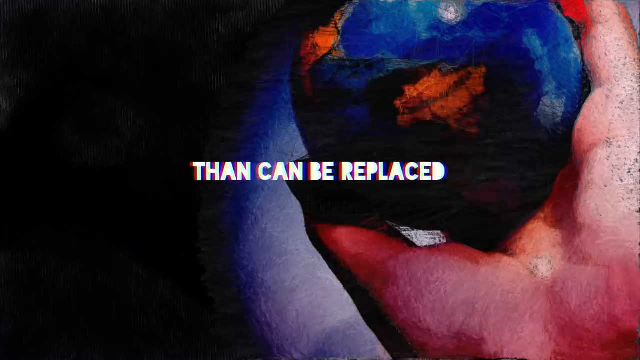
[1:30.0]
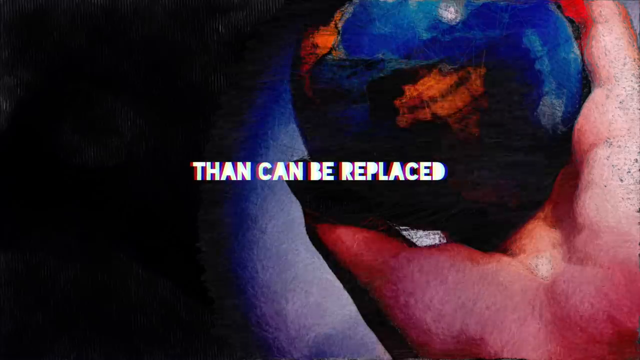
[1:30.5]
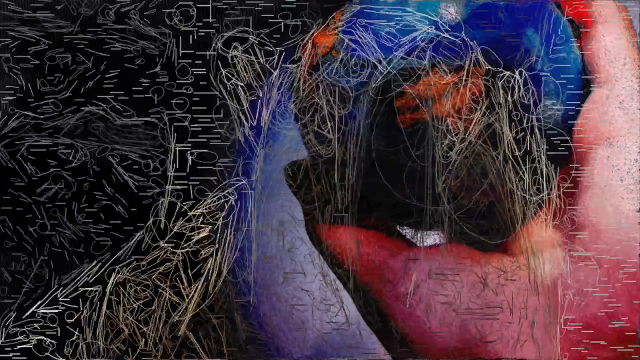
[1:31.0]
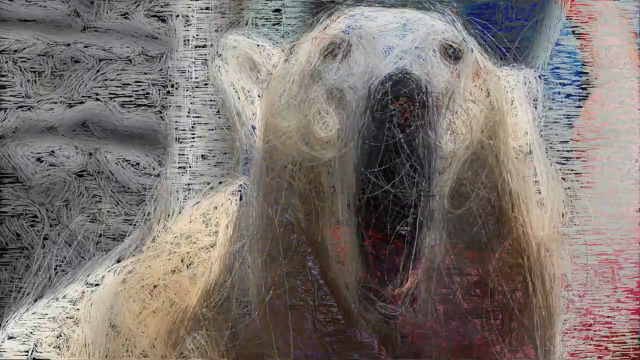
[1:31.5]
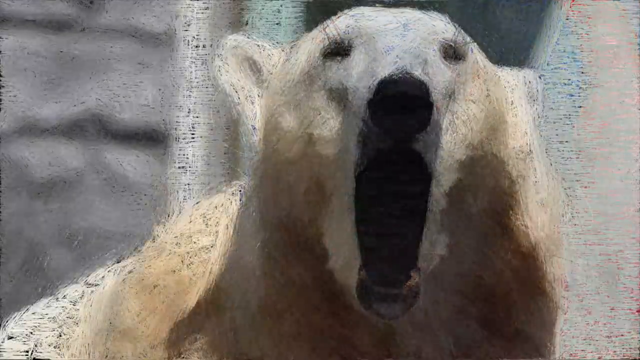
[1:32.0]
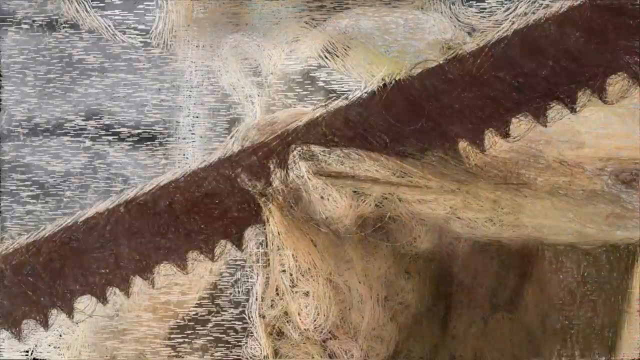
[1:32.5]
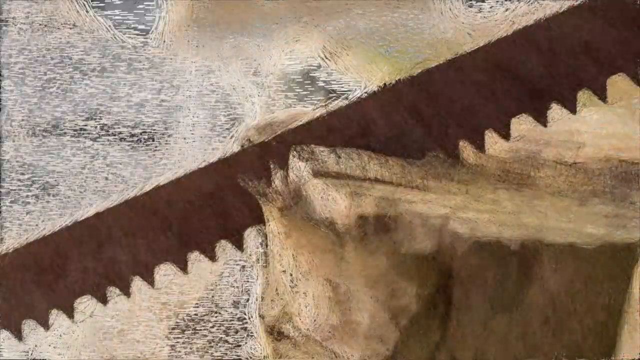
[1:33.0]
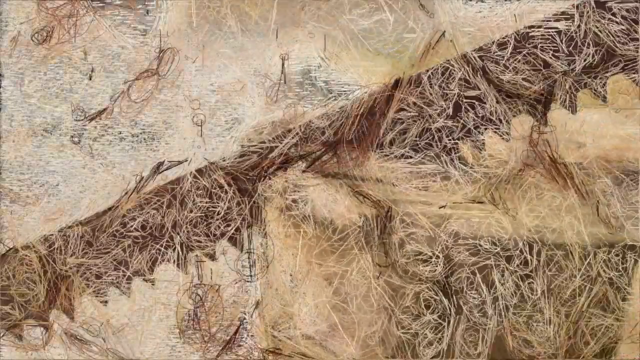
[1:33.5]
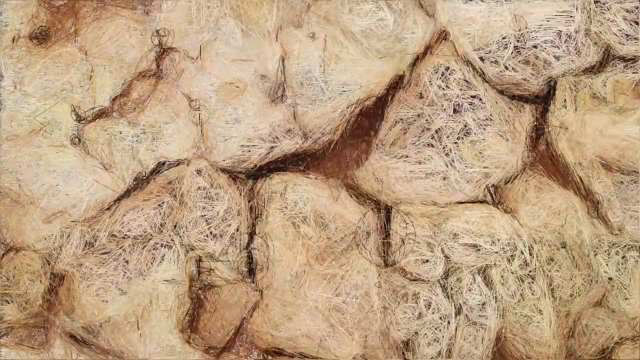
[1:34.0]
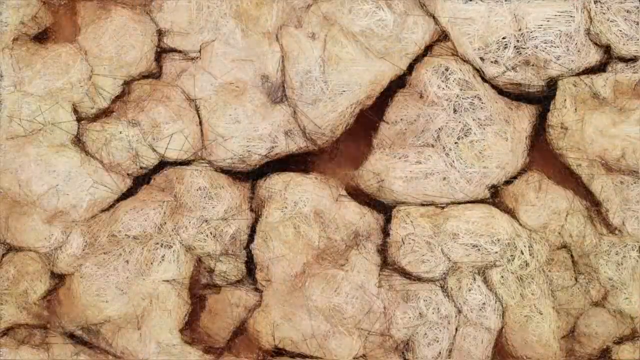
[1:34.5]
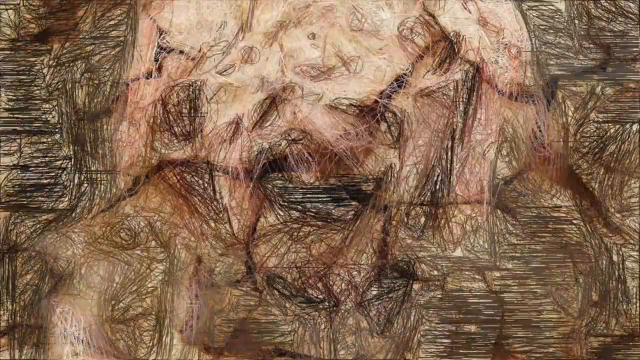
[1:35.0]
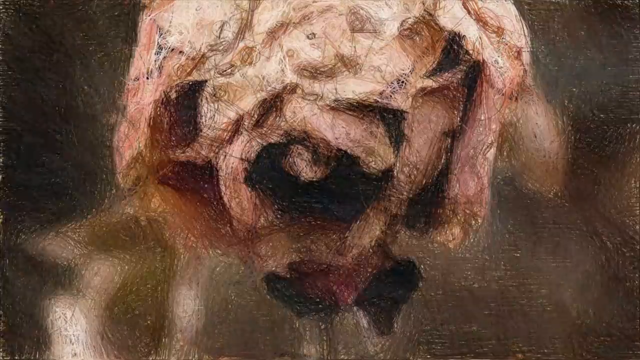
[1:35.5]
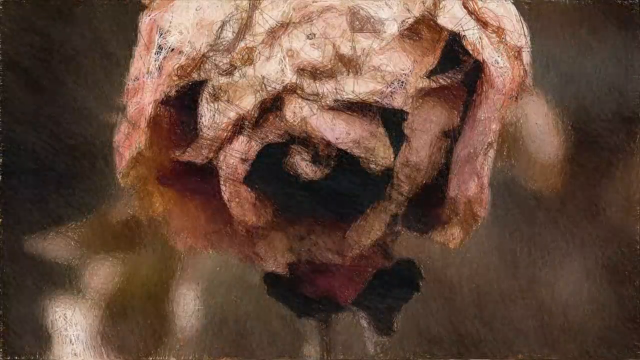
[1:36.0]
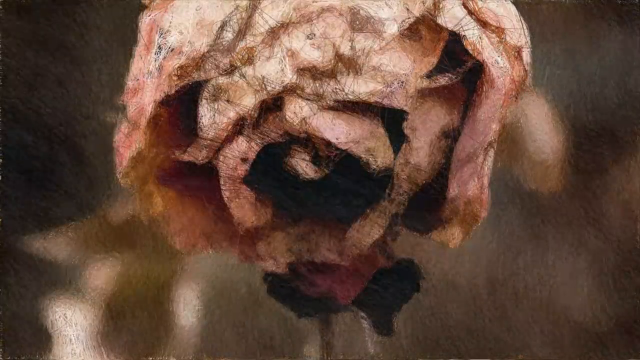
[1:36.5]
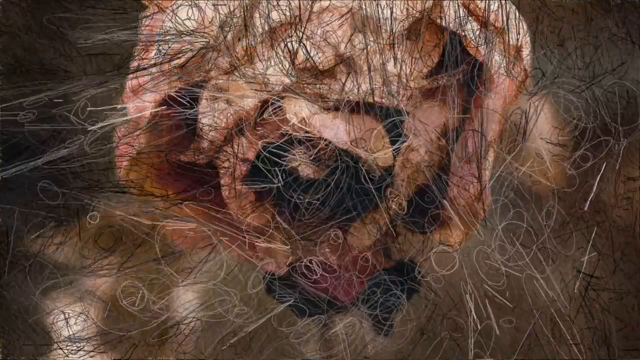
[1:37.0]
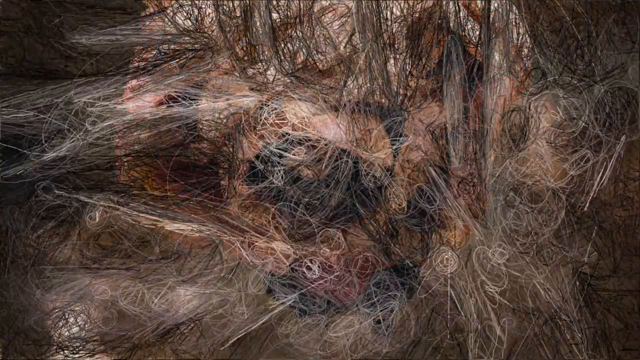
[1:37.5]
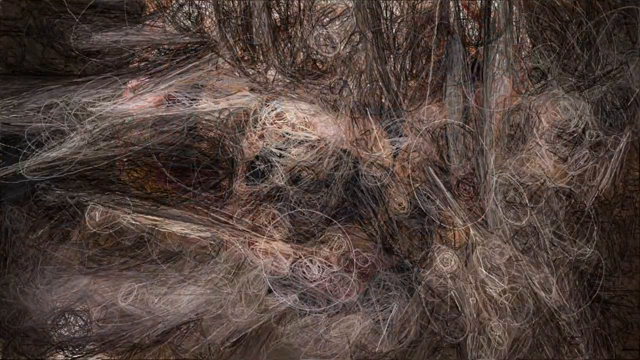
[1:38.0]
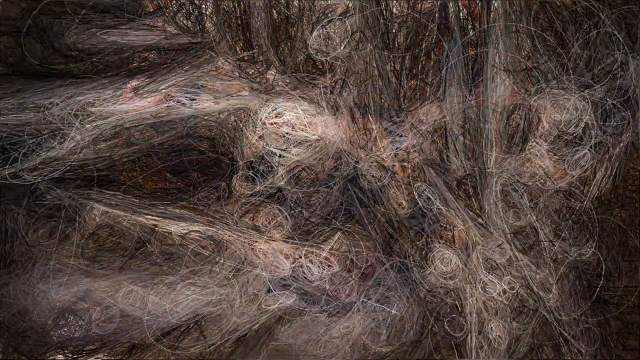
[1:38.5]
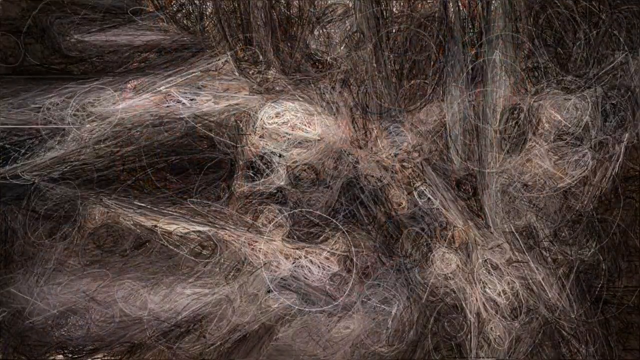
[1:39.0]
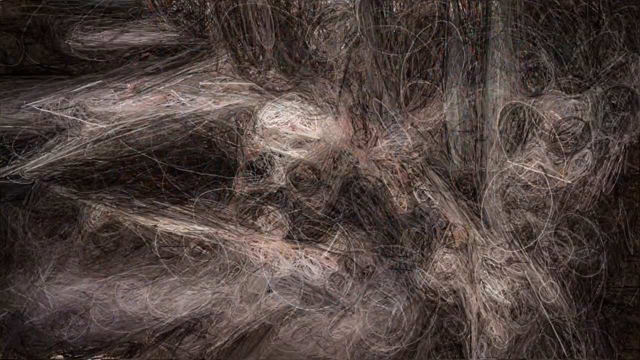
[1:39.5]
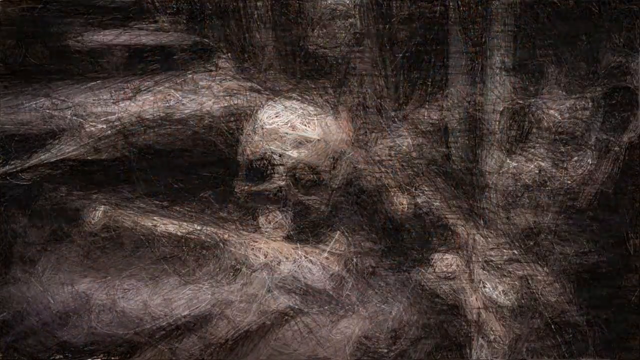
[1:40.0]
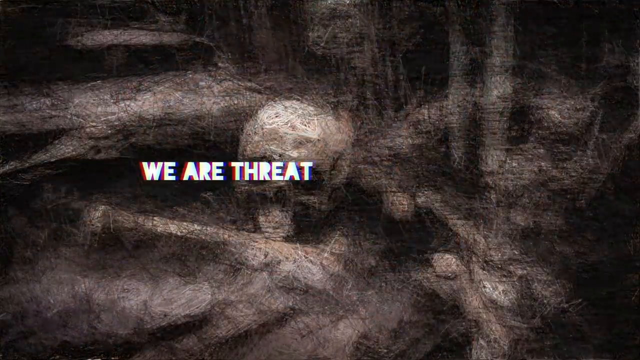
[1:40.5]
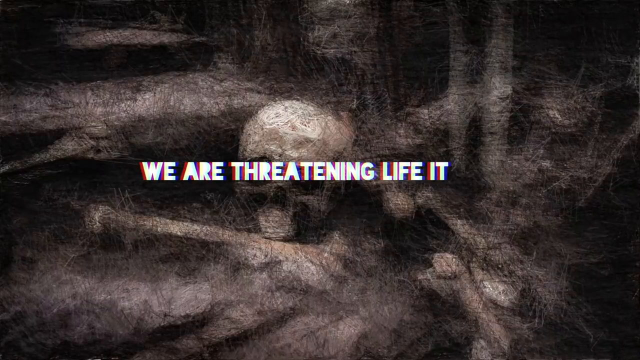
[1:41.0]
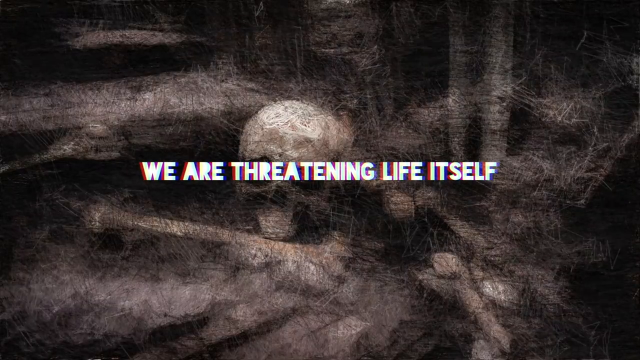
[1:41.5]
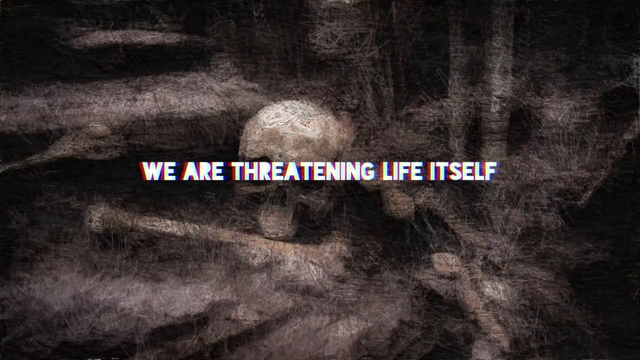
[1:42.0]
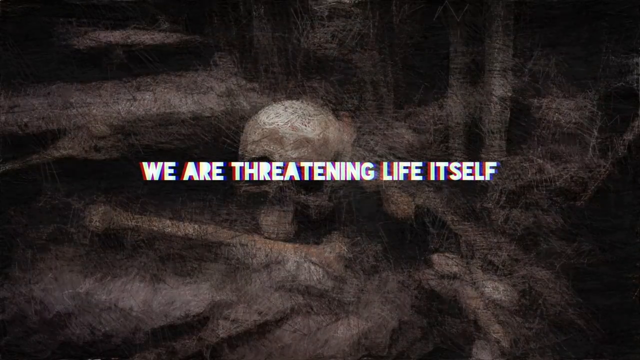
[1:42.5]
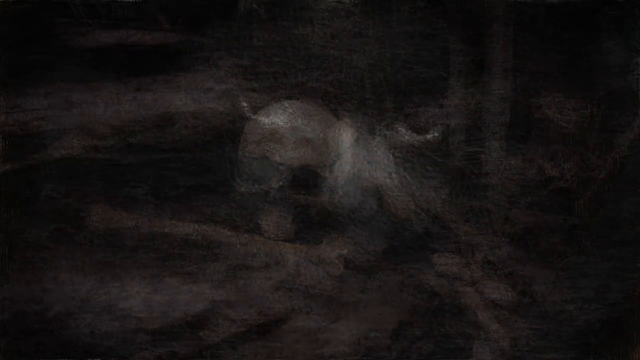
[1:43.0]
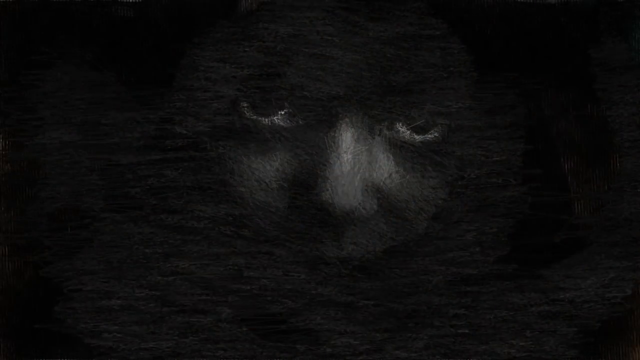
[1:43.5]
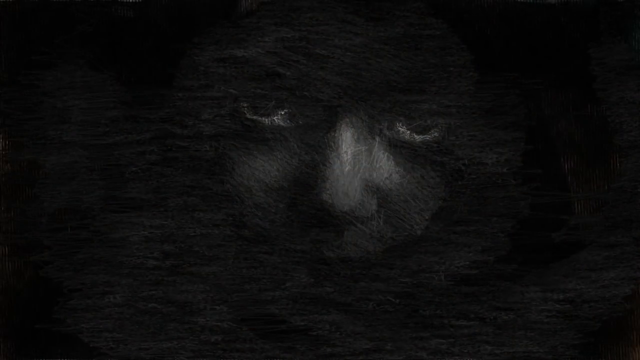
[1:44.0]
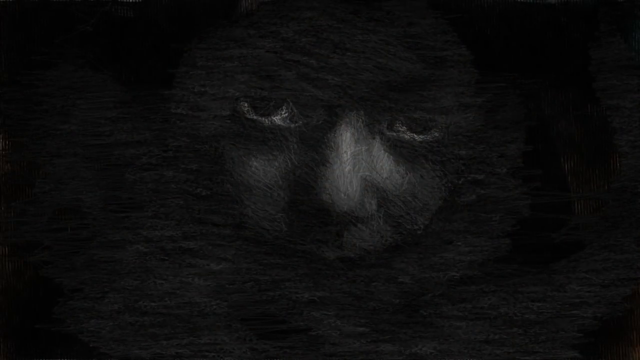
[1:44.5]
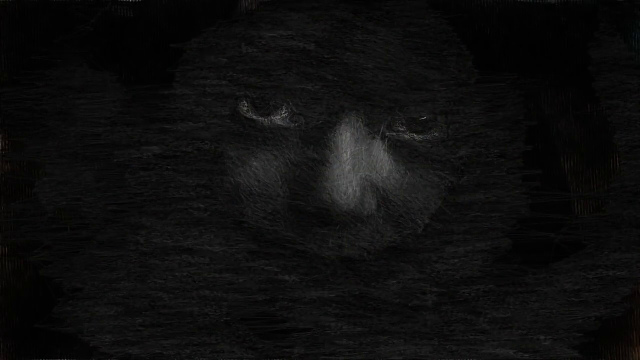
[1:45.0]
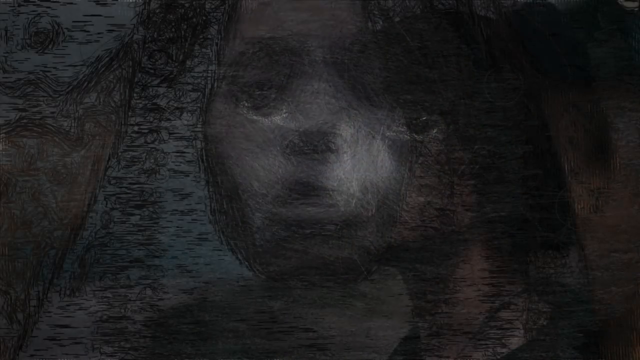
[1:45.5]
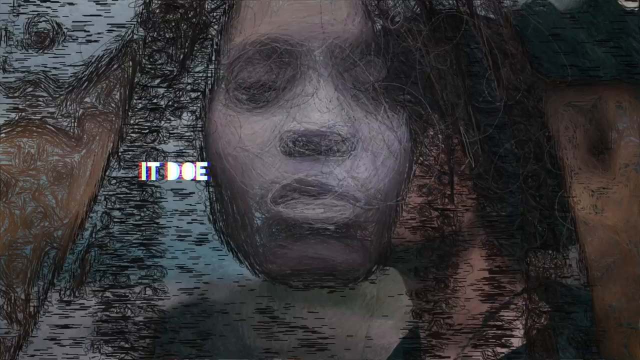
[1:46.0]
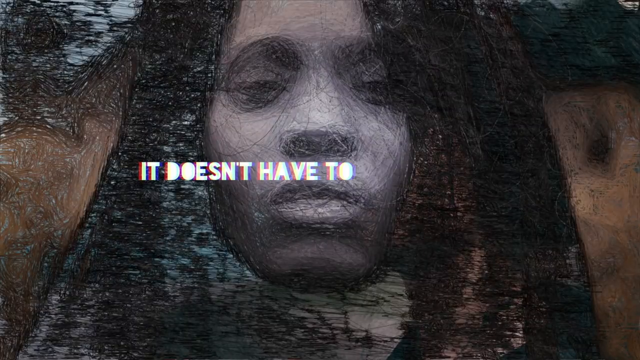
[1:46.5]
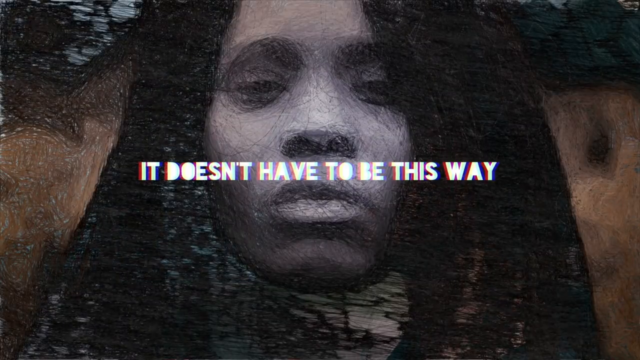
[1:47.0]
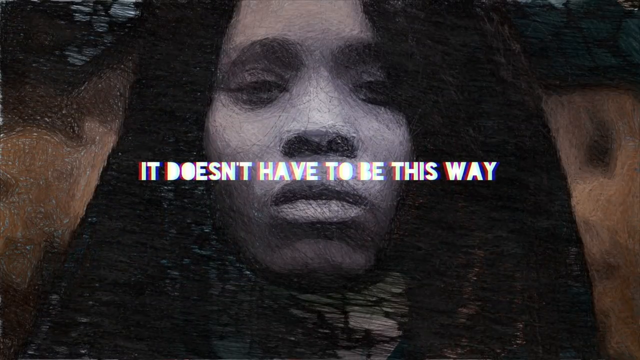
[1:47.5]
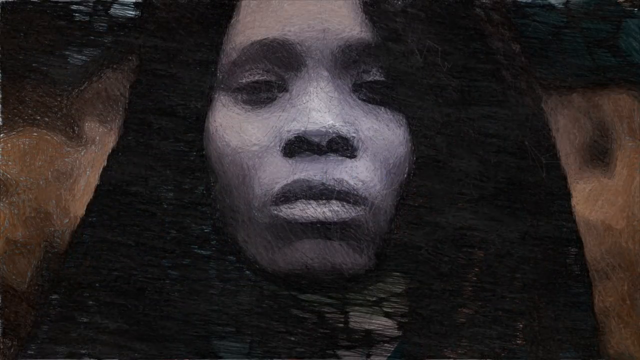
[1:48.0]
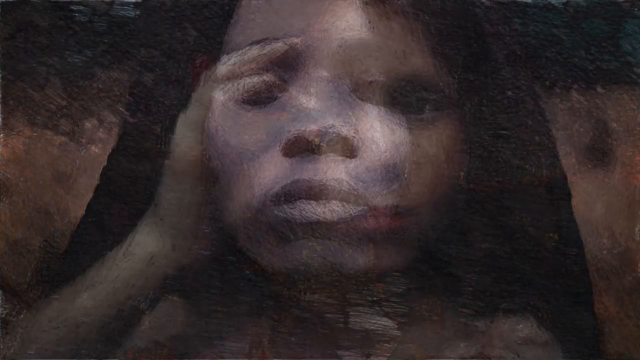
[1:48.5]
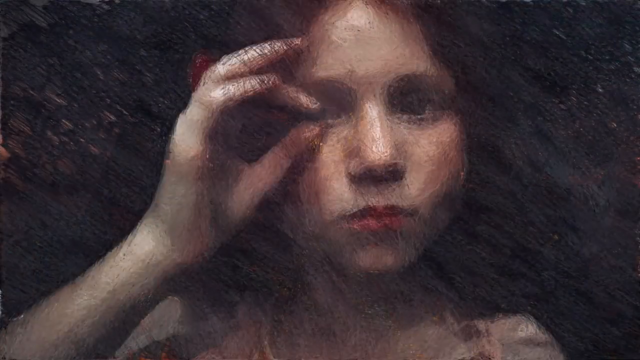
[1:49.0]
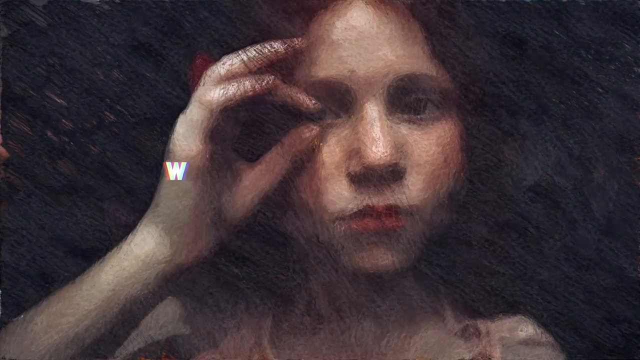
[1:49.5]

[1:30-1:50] On-screen text reads "we are threatening life itself", then "does it have to be this way" and "we have a option to be better". Someone holds an old map in her hand, and pictures of white and black people appear.